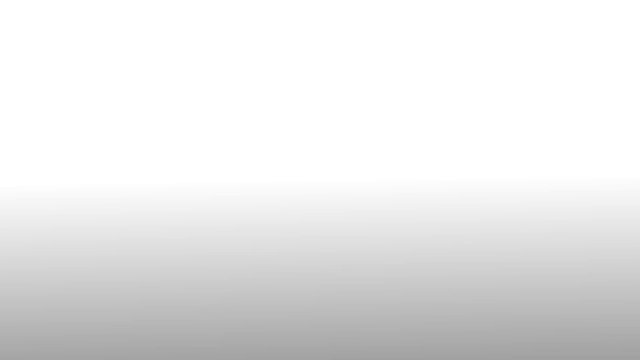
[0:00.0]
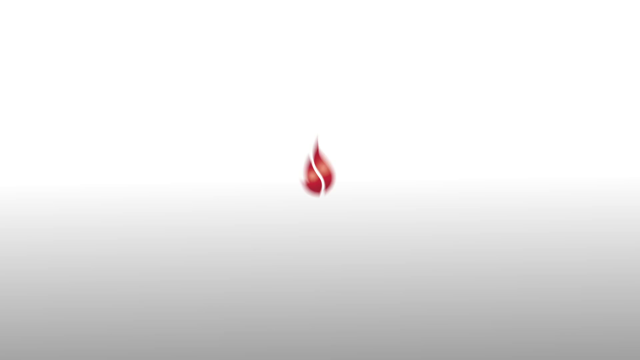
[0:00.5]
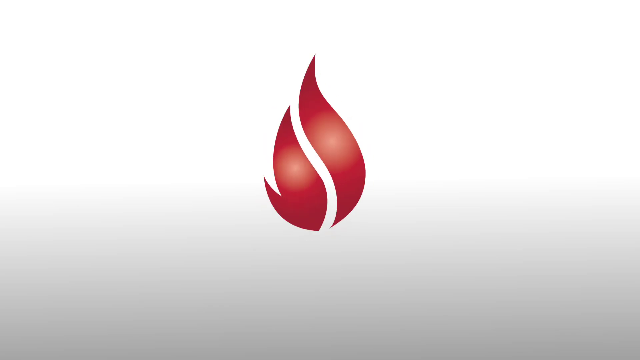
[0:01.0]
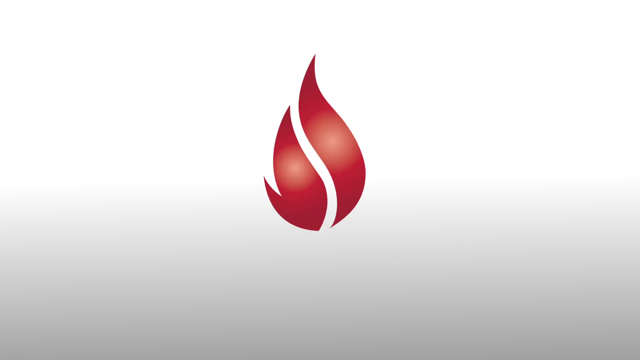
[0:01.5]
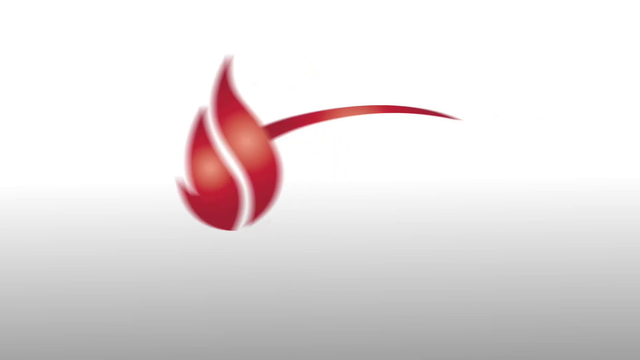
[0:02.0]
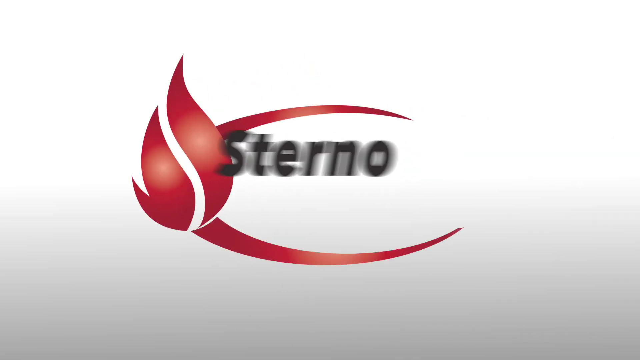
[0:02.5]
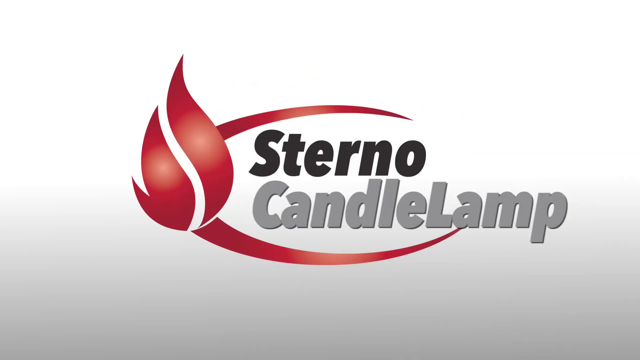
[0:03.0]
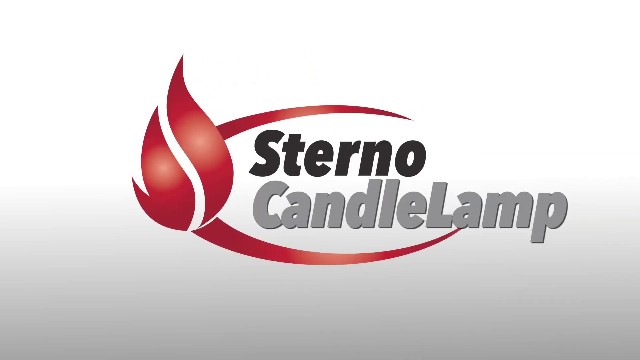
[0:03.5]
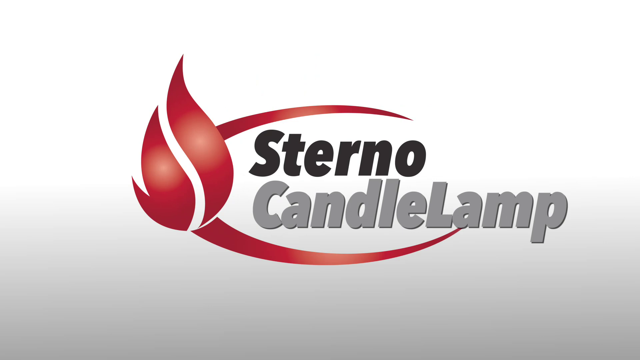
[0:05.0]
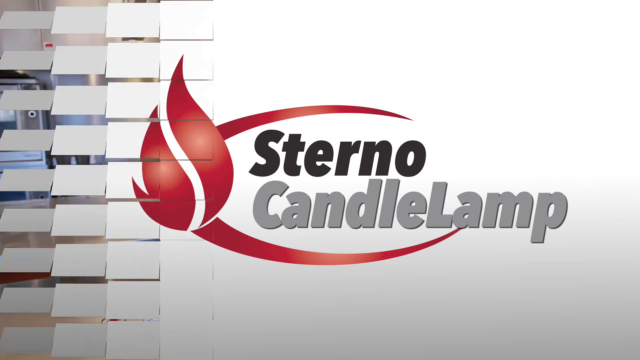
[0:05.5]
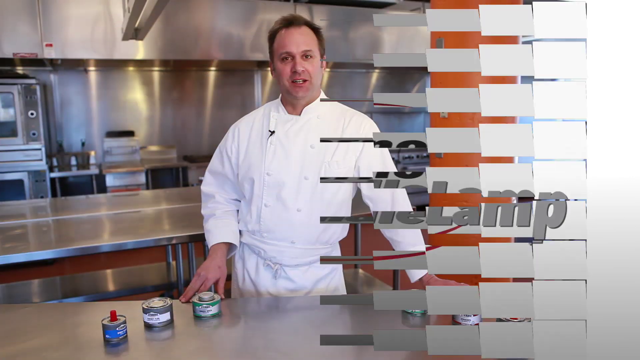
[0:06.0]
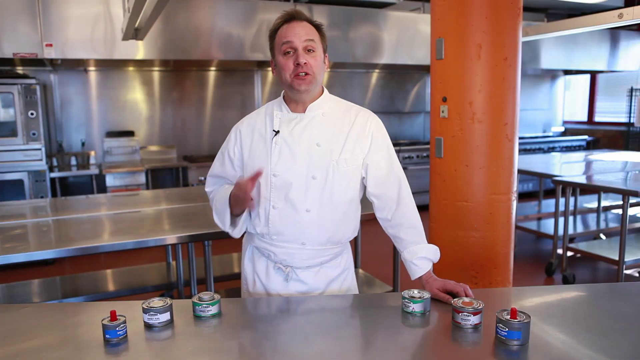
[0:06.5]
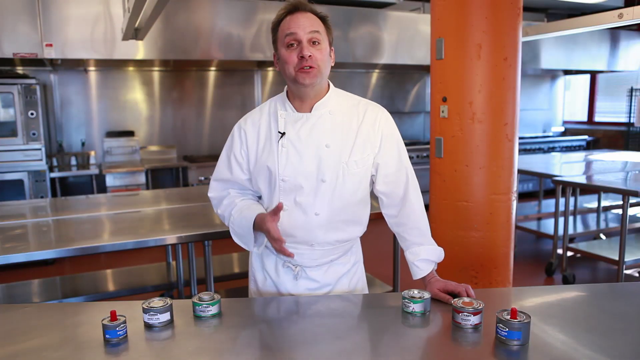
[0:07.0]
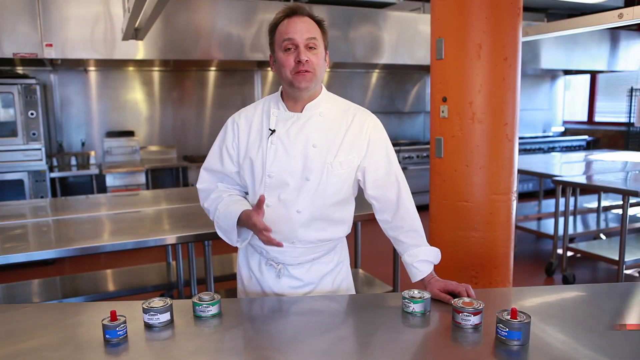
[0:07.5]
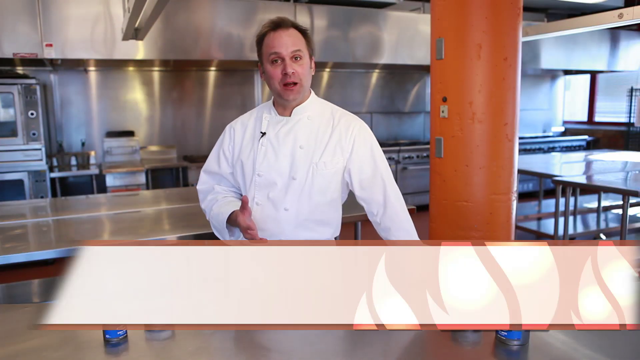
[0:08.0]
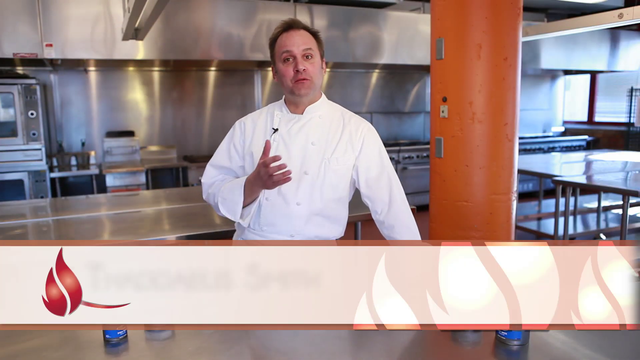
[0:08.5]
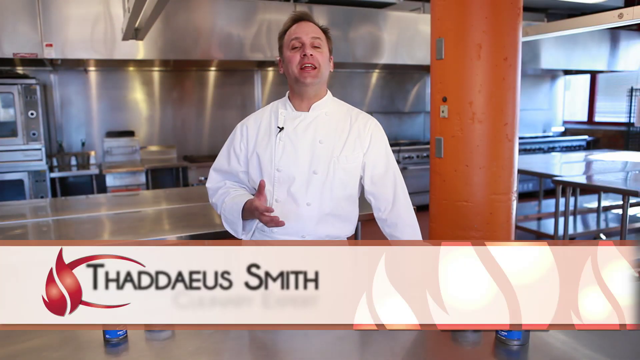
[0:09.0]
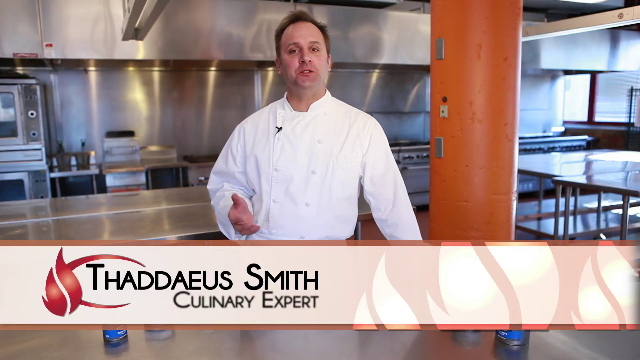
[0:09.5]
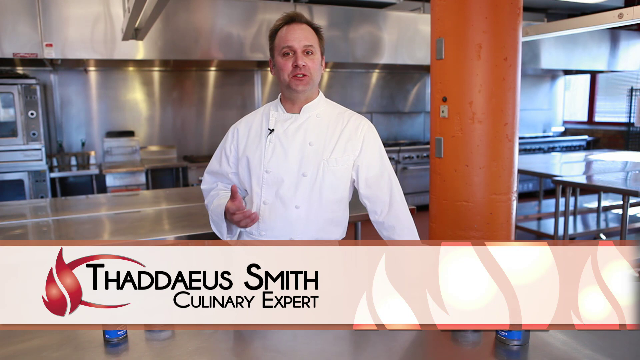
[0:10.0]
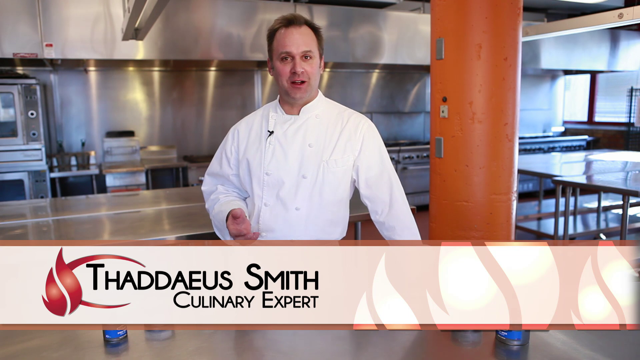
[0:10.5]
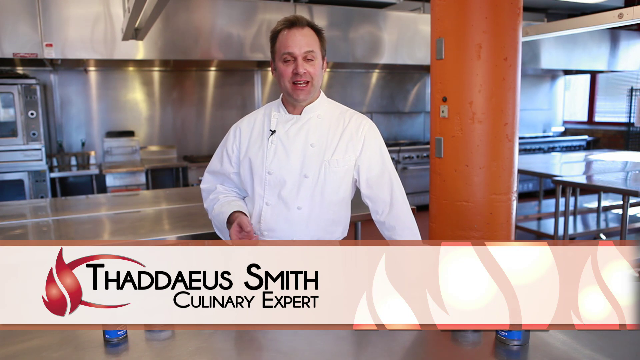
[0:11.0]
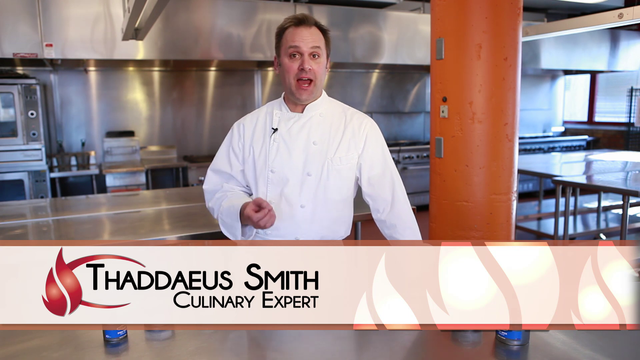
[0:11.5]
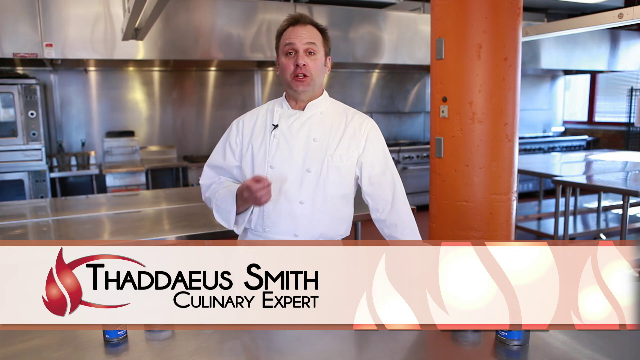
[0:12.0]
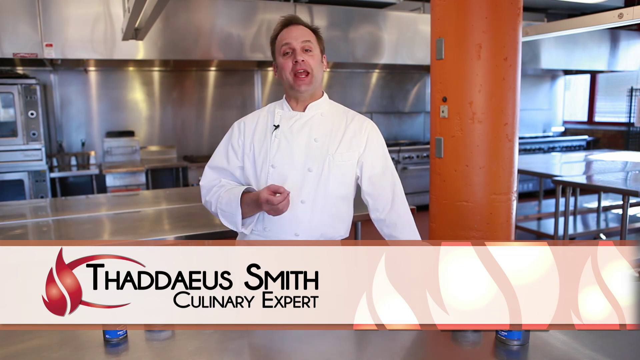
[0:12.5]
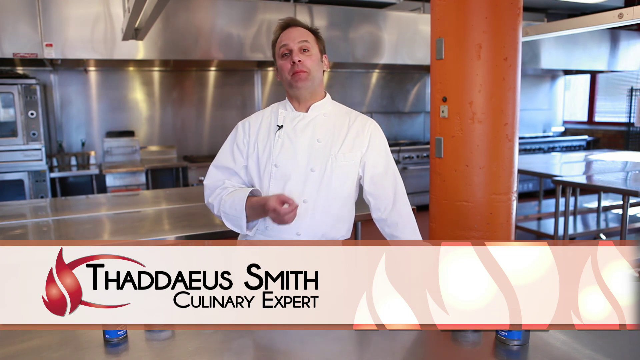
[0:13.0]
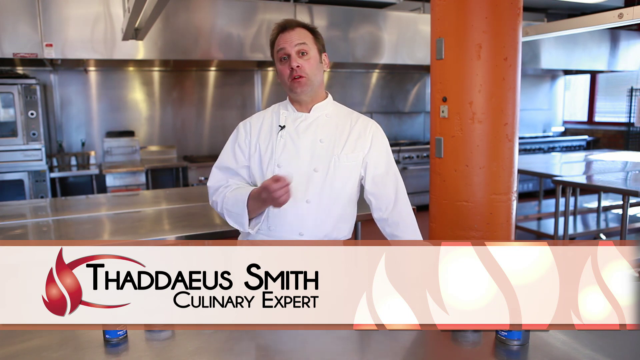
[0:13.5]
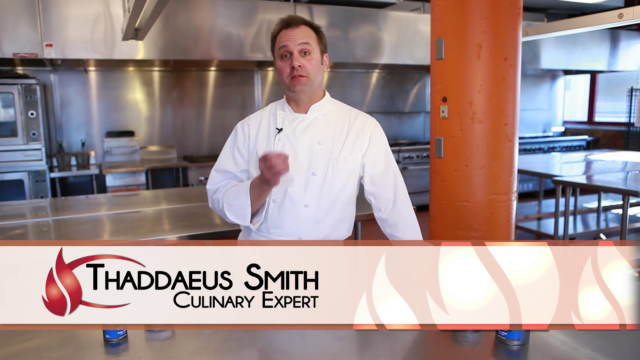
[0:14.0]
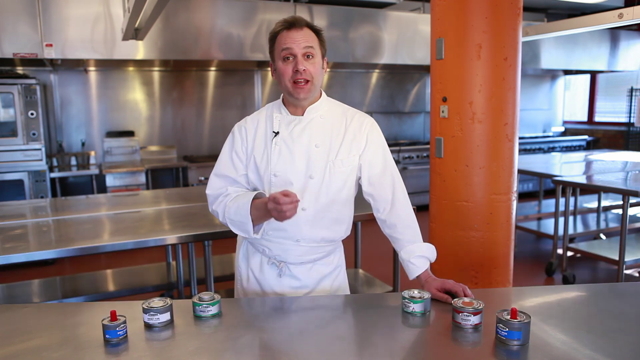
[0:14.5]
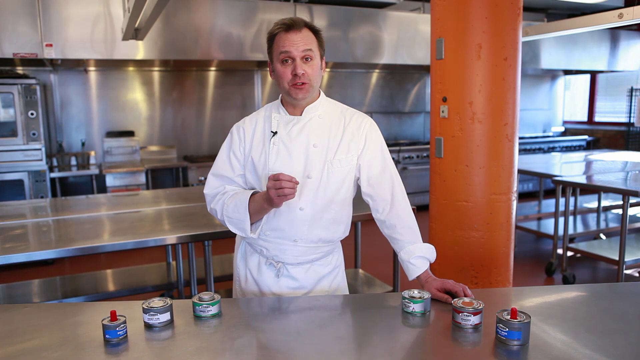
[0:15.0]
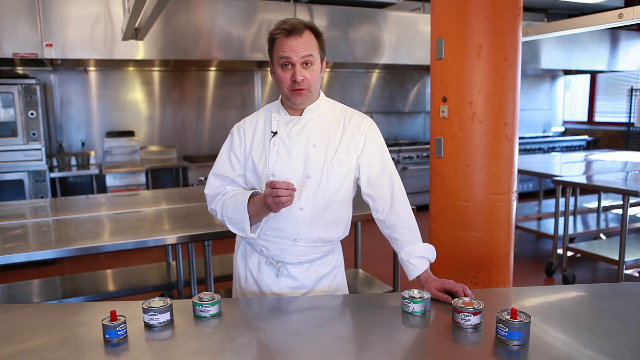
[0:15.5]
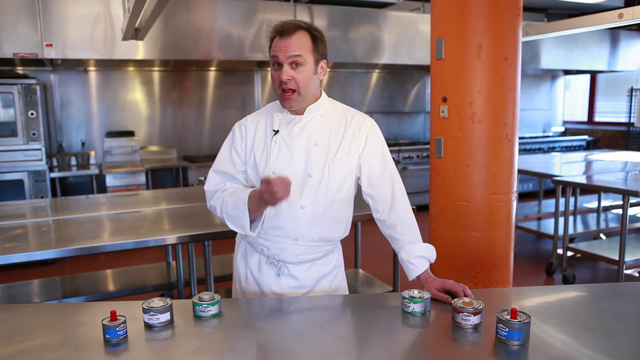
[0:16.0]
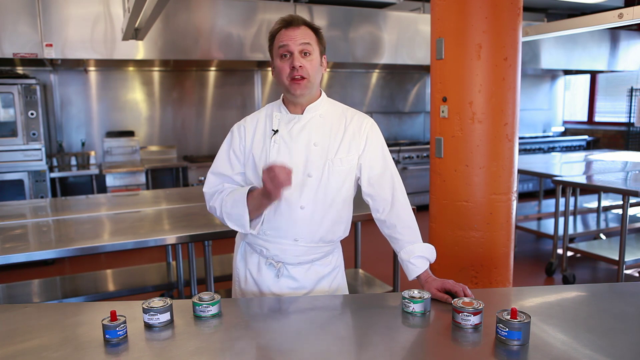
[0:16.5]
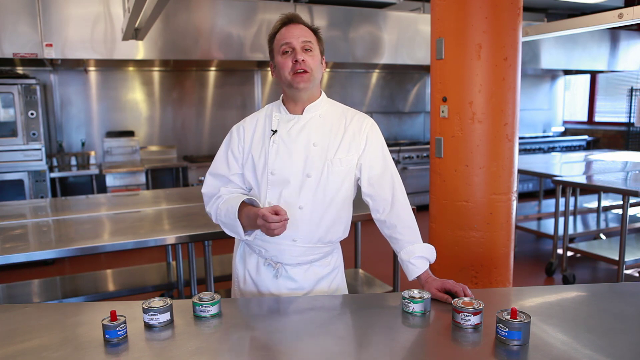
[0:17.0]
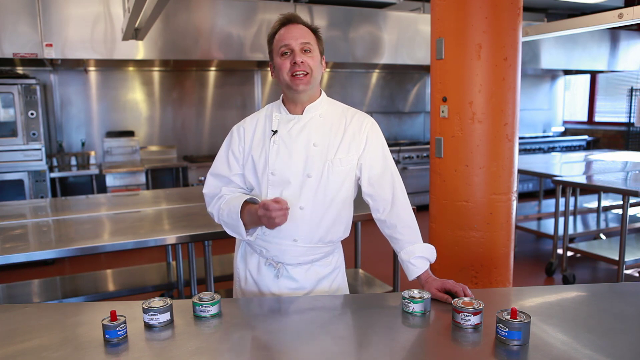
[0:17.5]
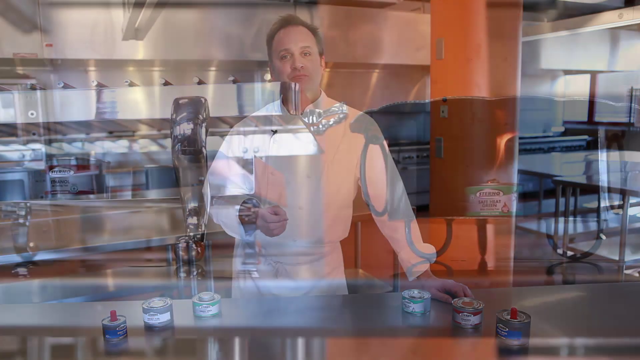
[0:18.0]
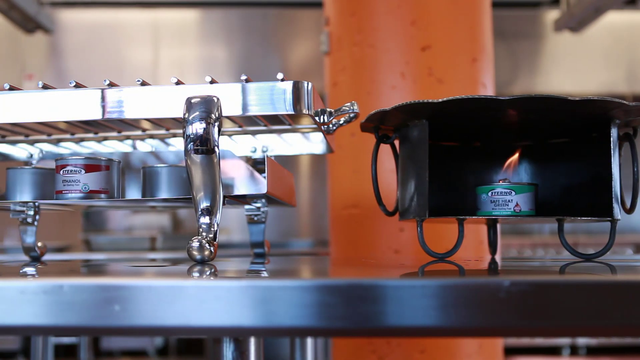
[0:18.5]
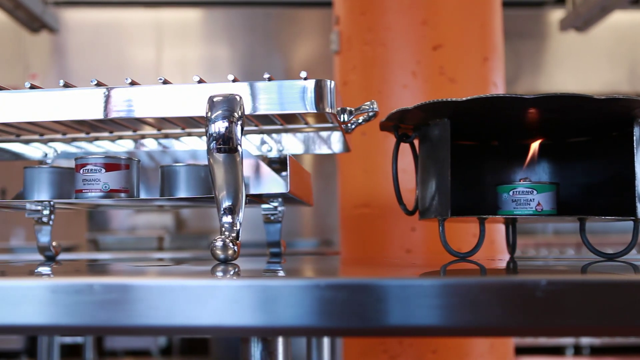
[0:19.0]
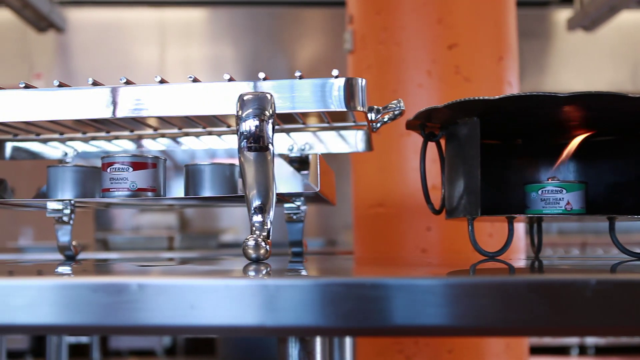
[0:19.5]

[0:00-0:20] The video begins with a red flame graphic in the center of the screen. The red flame extends into a strip on the top and a strip on the bottom, and within the two strips is Sterno Candle Lamp. The scene changes to a man standing in the center of a commercial kitchen. He wears a chef's outfit, including a white shirt and a white apron, and he speaks to the camera while gesturing with his right hand. A text box appears at the bottom of the screen identifying him as Thadius Smith, a culinary expert. He continues speaking to the camera, gesturing with his right hand. The scene then changes: on the right is a black pot, in the center of it is a blue part with flame coming out of it, and on the left is part of a stainless steel commercial kitchen.